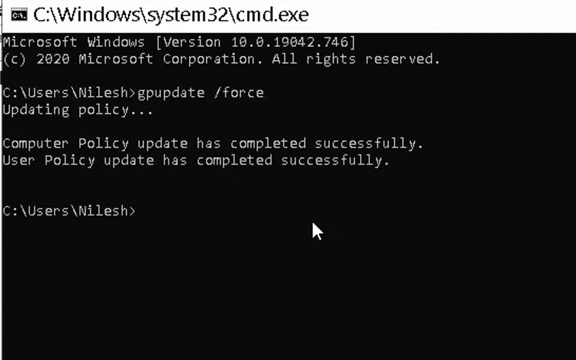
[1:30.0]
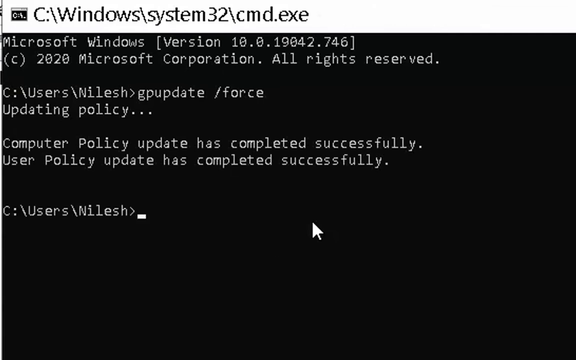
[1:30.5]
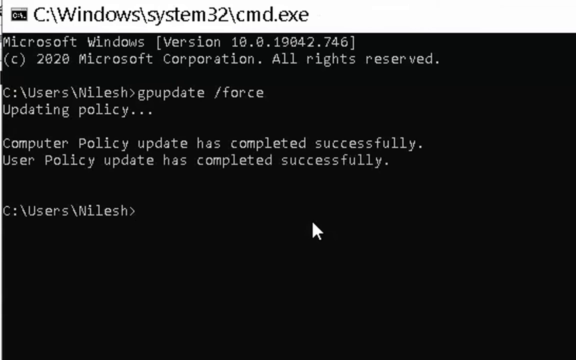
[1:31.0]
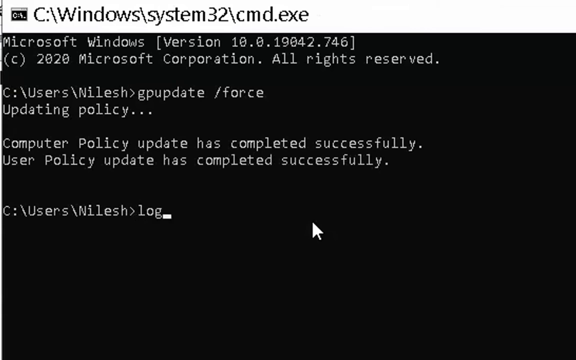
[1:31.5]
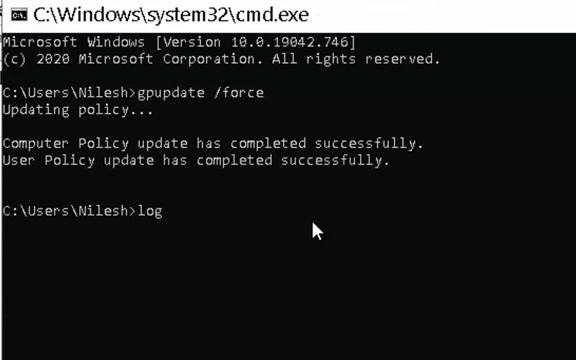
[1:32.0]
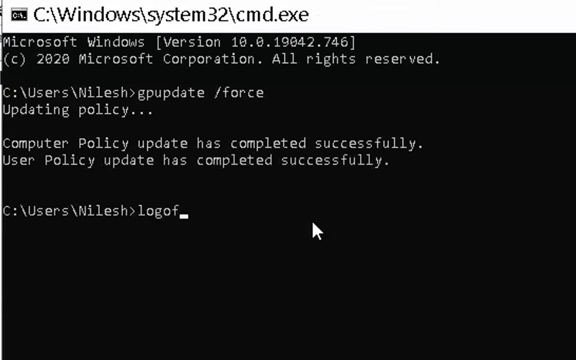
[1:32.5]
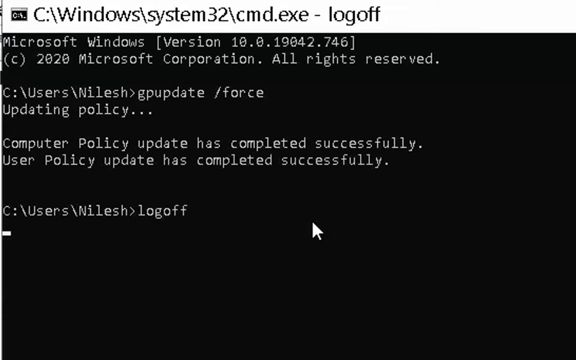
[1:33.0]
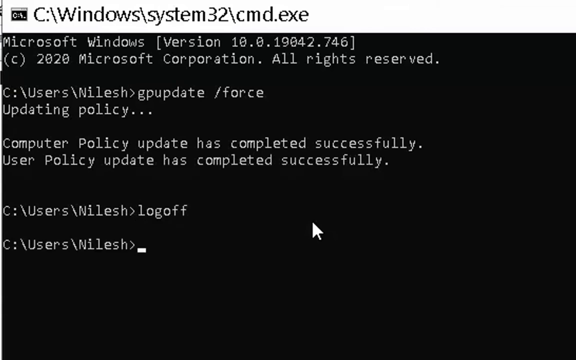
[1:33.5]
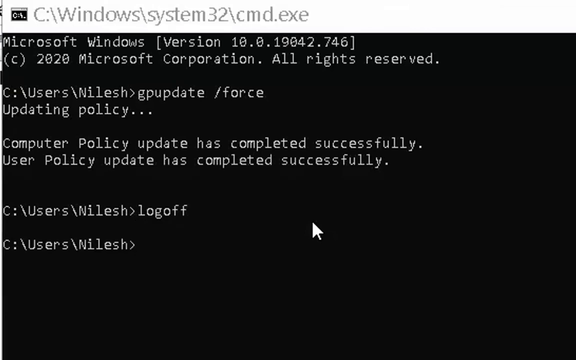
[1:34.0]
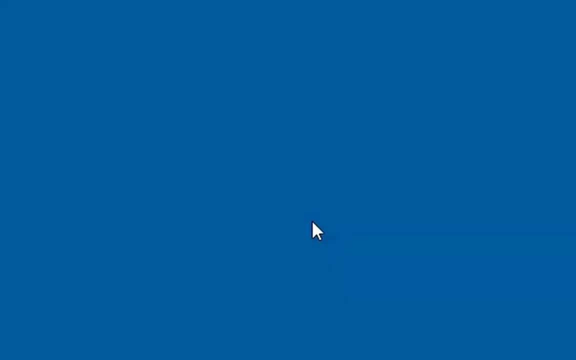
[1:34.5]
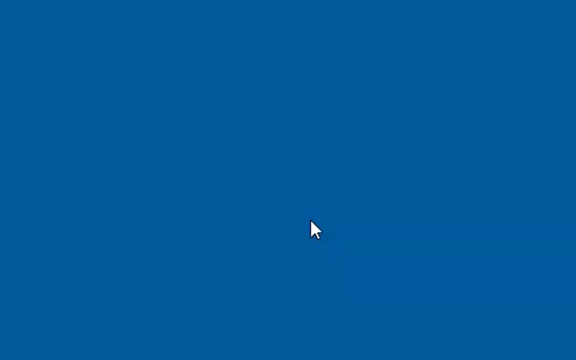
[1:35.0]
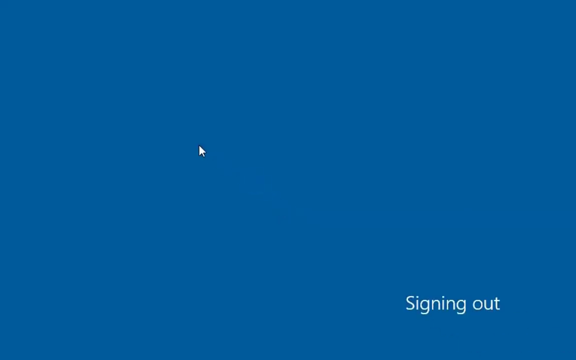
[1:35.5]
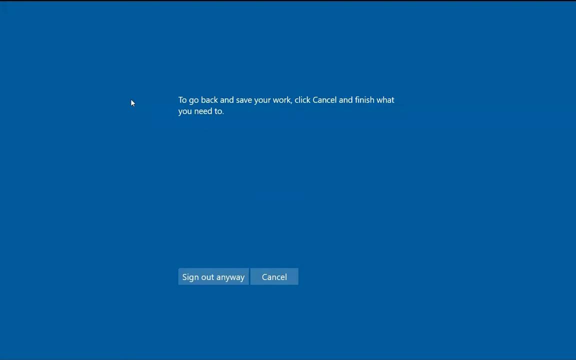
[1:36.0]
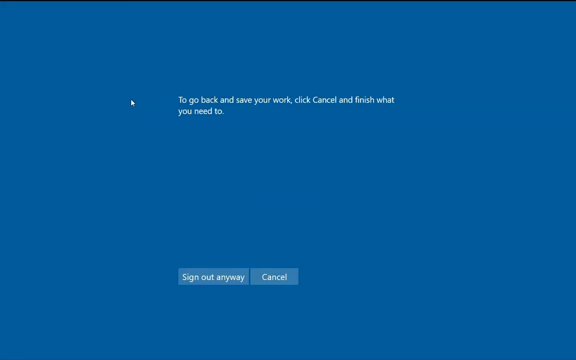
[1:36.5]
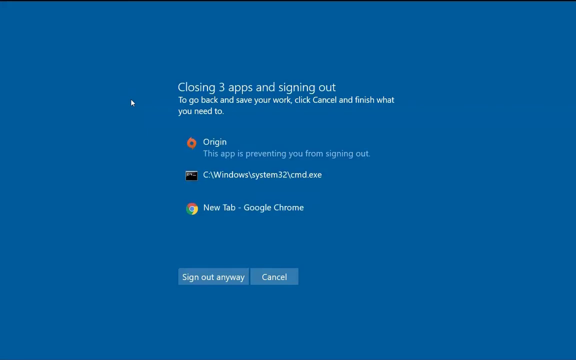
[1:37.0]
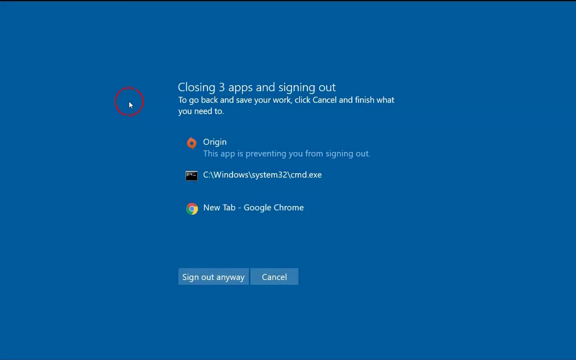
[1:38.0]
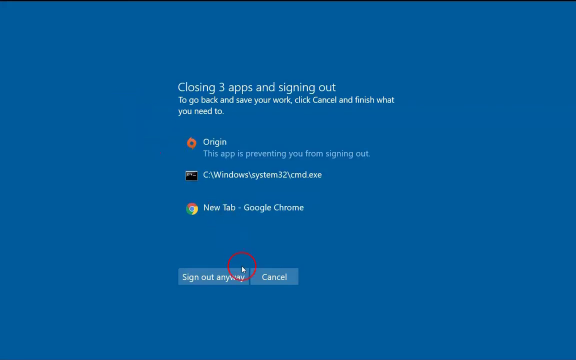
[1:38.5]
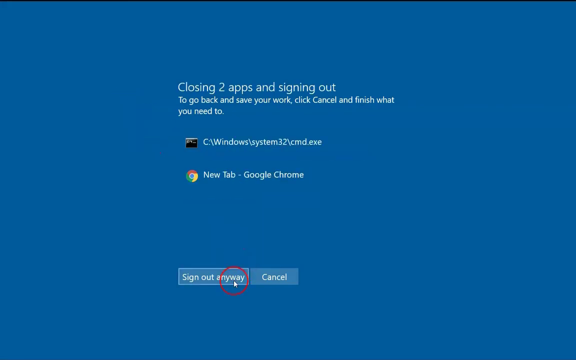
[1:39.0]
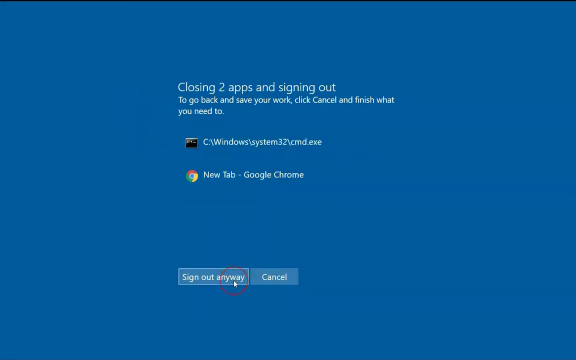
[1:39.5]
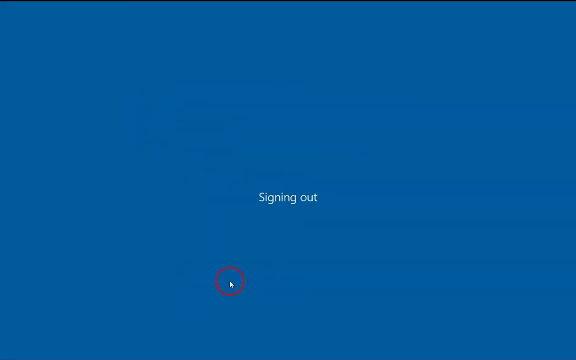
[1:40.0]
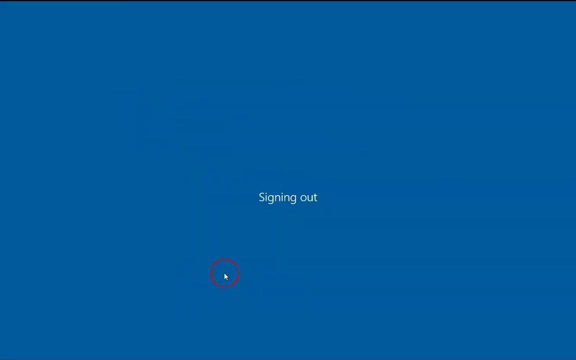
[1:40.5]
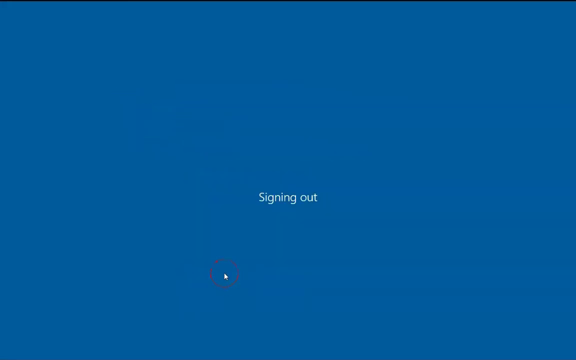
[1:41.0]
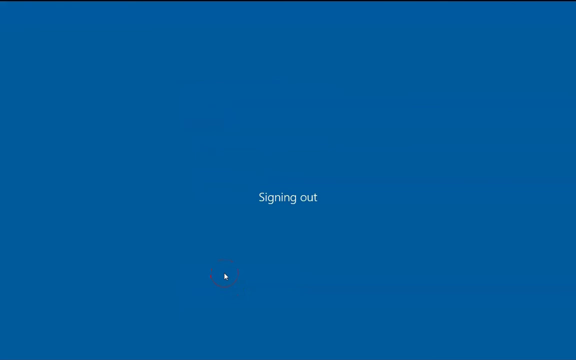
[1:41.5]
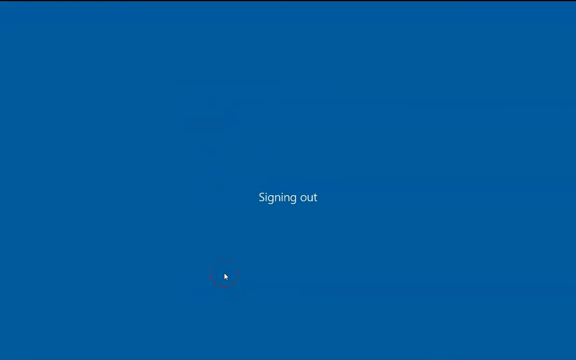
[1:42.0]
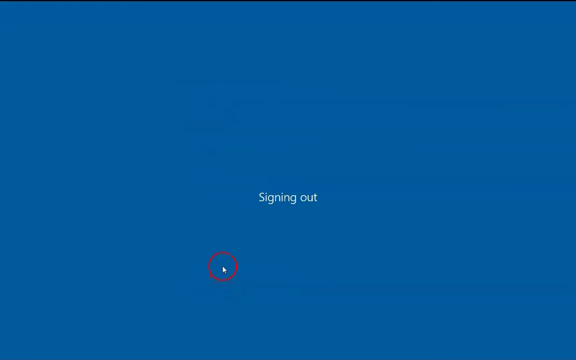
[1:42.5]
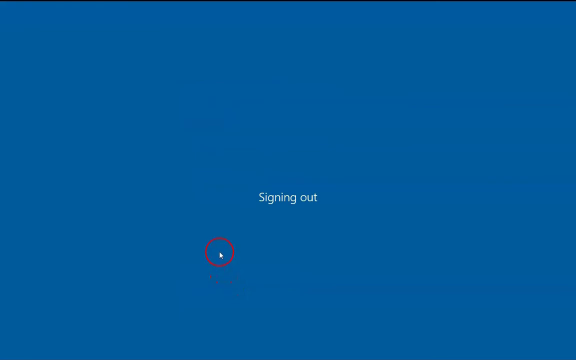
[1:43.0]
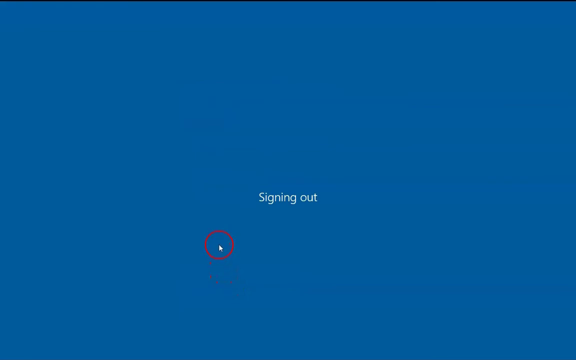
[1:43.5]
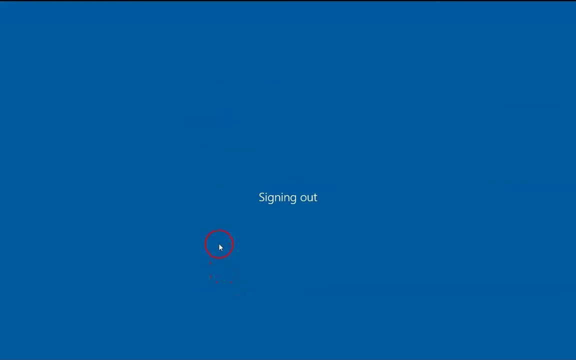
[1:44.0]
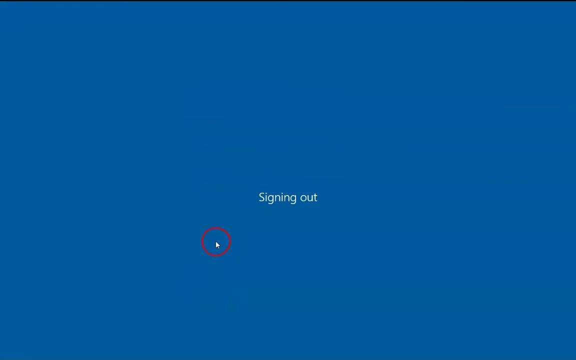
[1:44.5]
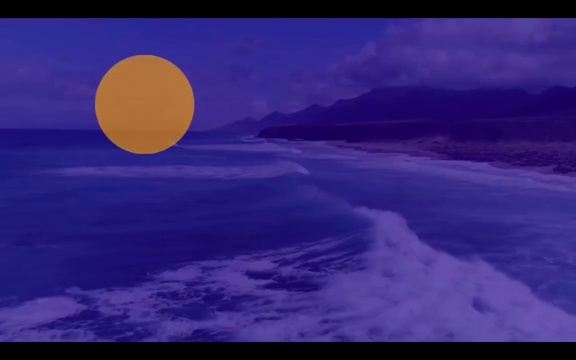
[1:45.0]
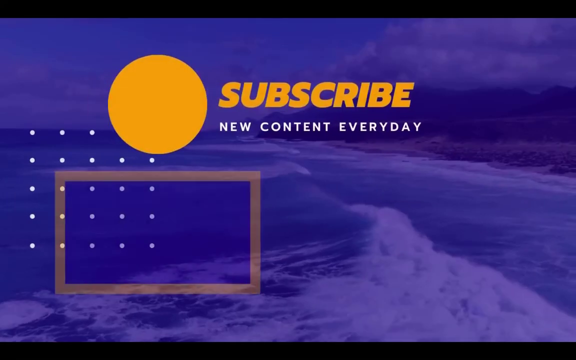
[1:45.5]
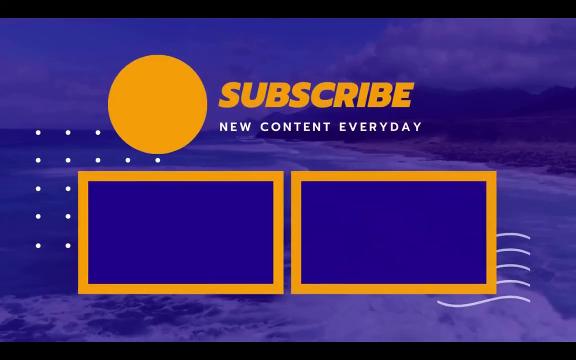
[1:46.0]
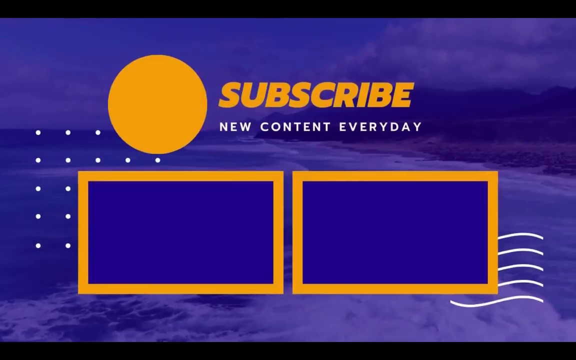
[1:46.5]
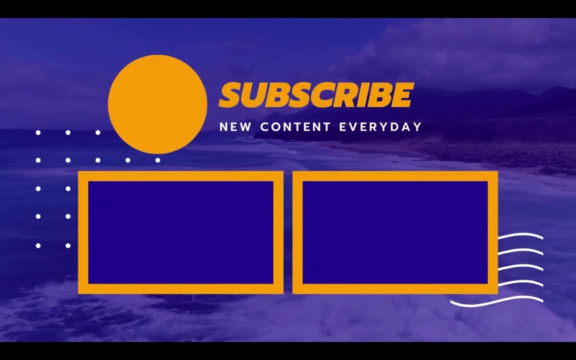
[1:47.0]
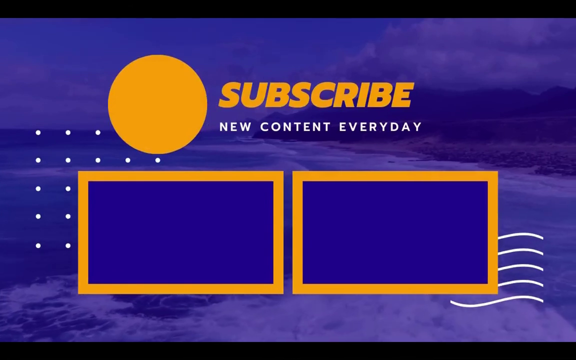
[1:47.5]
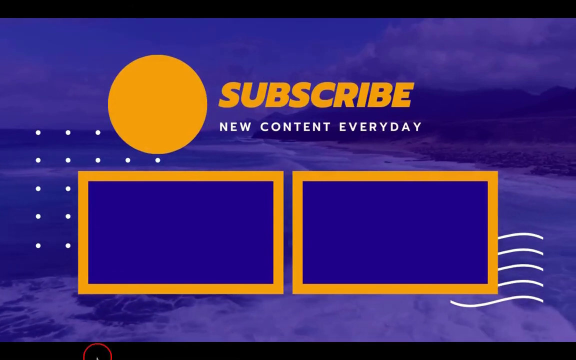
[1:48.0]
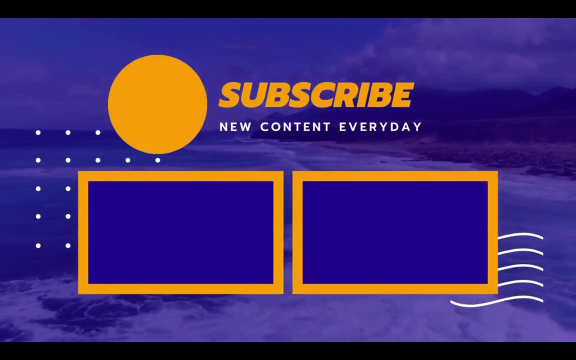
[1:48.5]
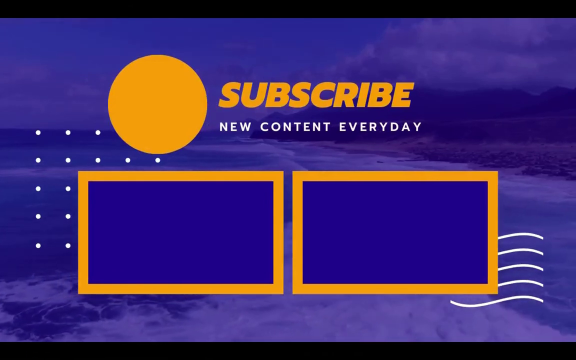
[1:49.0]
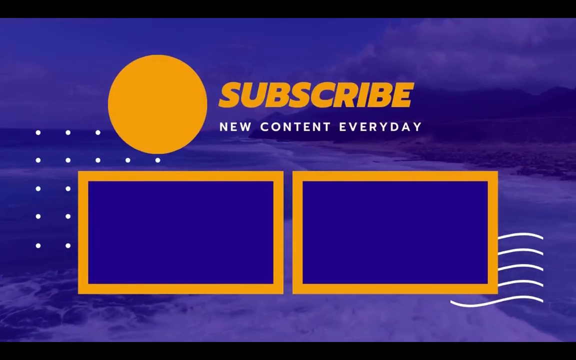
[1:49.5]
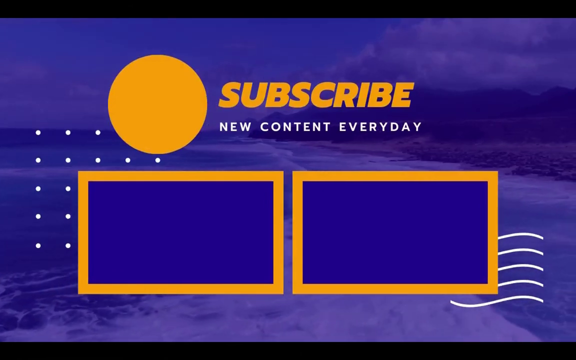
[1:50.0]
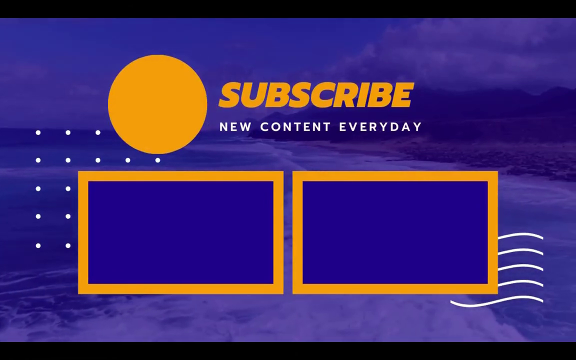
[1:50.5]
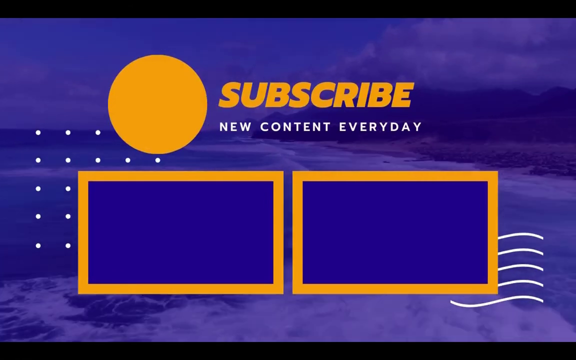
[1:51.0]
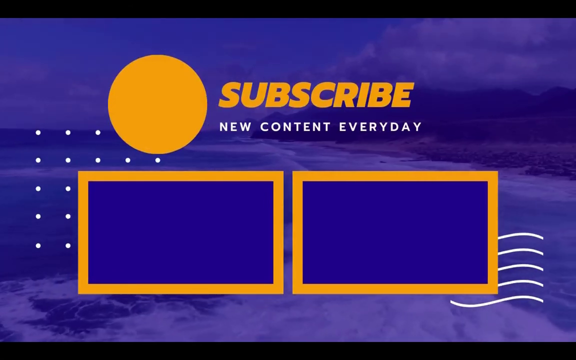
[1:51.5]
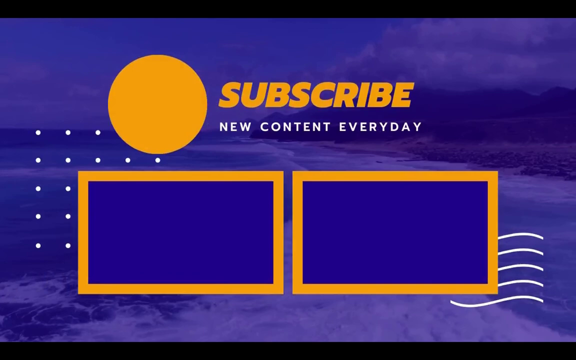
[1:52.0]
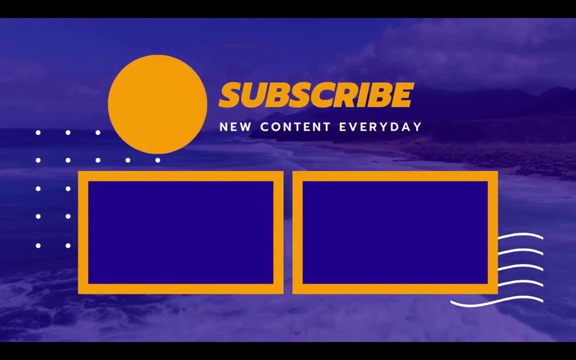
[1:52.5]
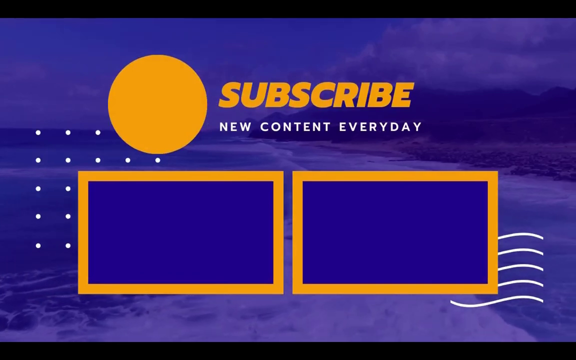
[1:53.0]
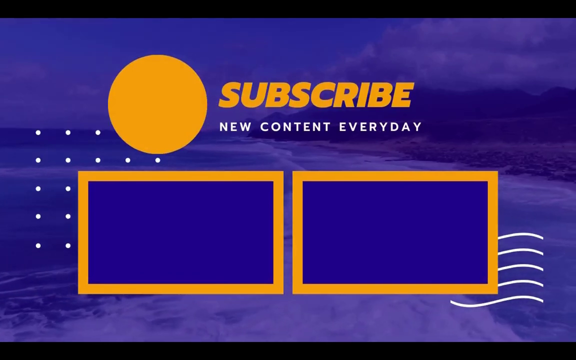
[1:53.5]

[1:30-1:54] A black computer screen appears, and it looks like the person has finished their work and is signing out. The screen shows "computer policy update has completed successfully," "User policy update has completed successfully," and "2020 Microsoft Corporation All Rights Reserved." In light blue on a blue screen are the words "signing out," followed by "closing three apps and signing out," "origin," "new tab," "sign out anyway," and "cancel," and then "Closing two apps and signing out." The pointer with the red circle around it moves slowly. The background is a light, kind of blue image overlaid with a darker filter, showing a beach, mountains and water that looks like the ocean, with waves moving. There is an orange circle and the orange words "subscribe" and "new content every day." Two blue windows in front, a little darker than the background and outlined in orange, also say "subscribe new content every day"; they look like they would probably be for other videos to click on. On the right side of the screen are a square made up of 25 small white dots and five small wave shapes. Finally, the message "computer policy update has completed successfully" appears.